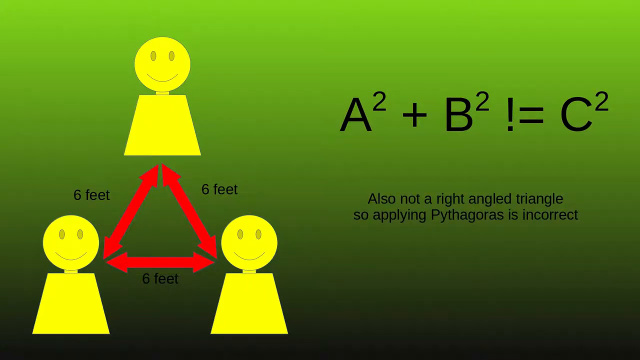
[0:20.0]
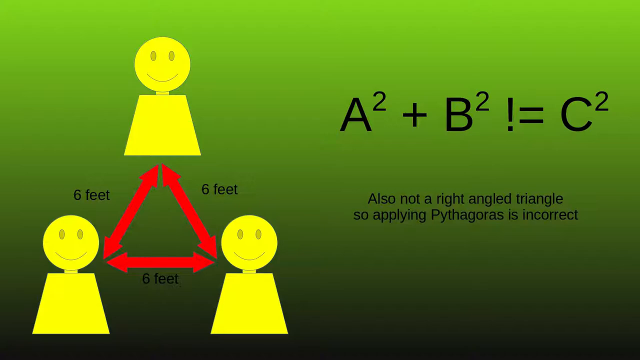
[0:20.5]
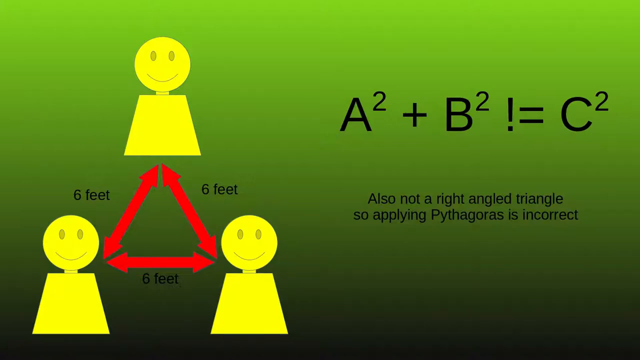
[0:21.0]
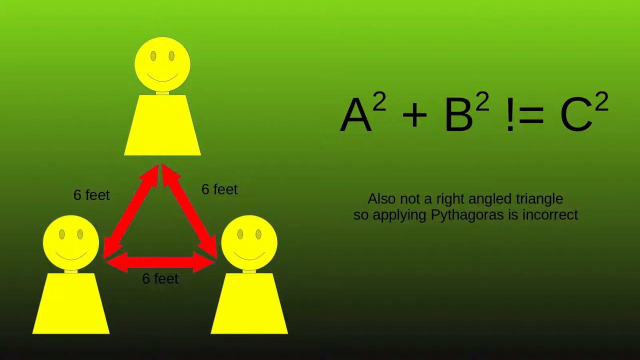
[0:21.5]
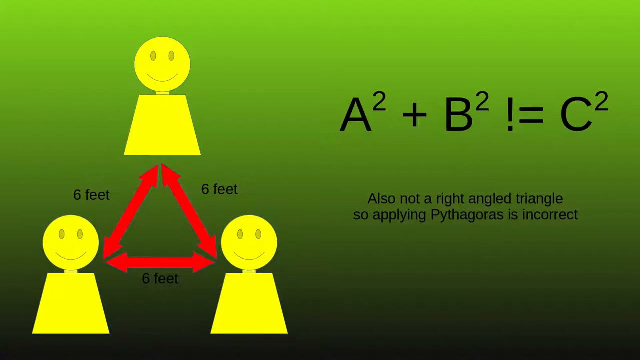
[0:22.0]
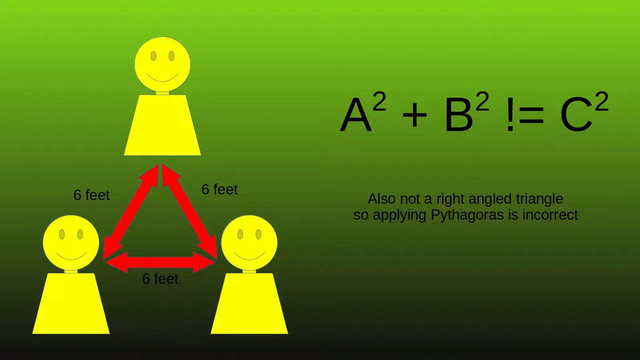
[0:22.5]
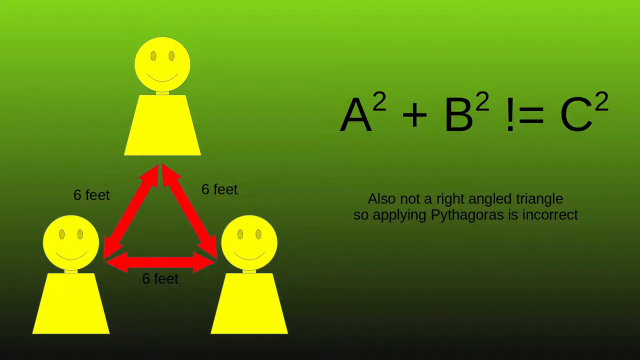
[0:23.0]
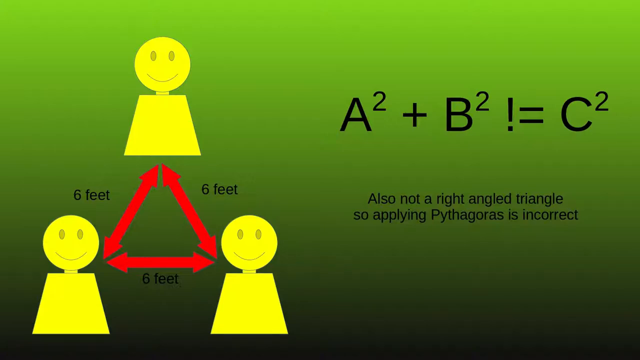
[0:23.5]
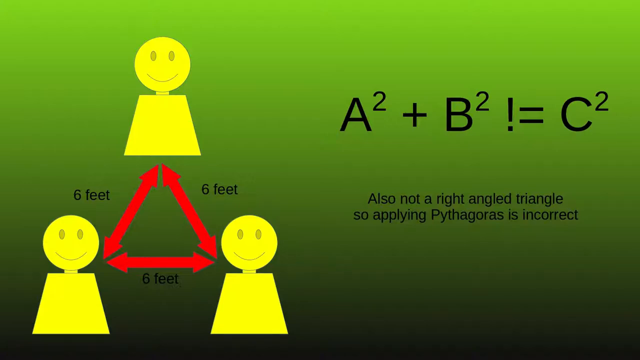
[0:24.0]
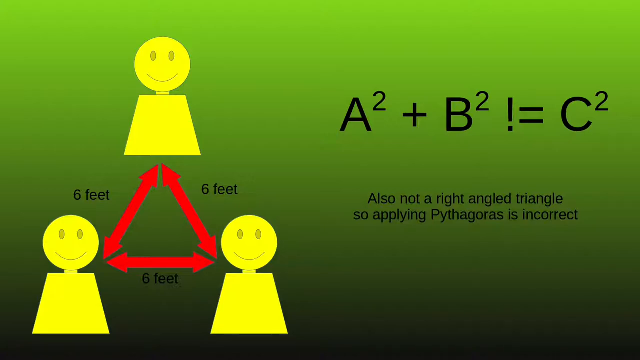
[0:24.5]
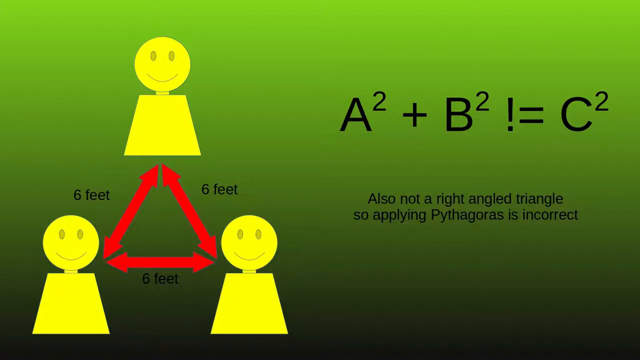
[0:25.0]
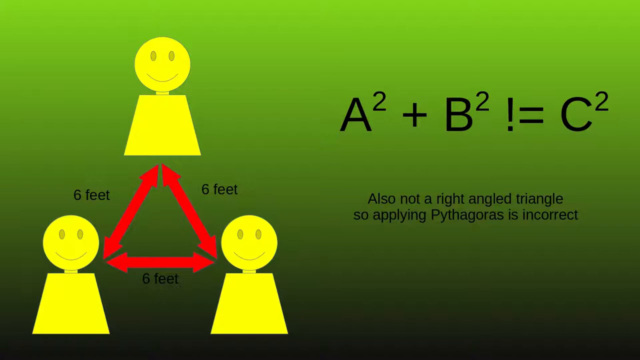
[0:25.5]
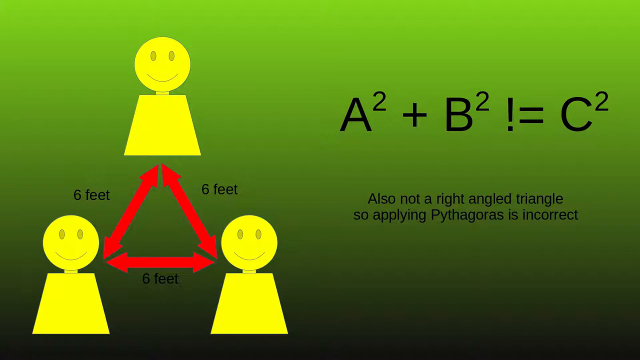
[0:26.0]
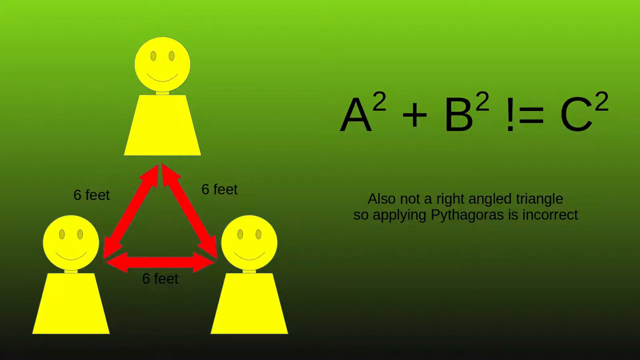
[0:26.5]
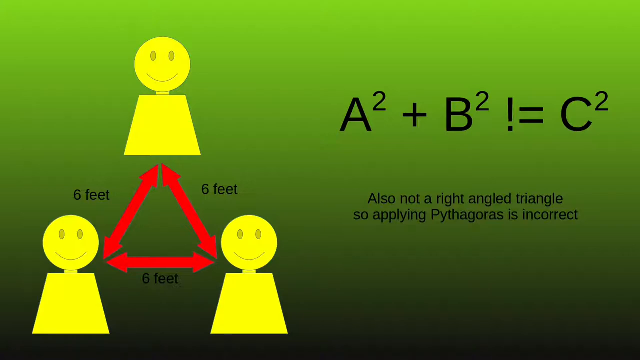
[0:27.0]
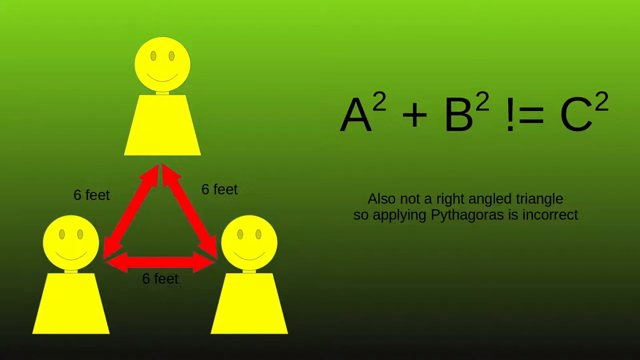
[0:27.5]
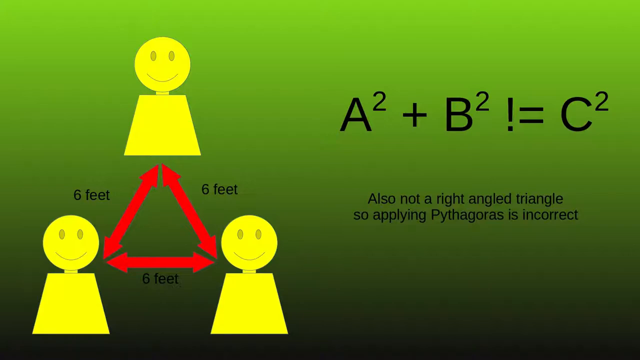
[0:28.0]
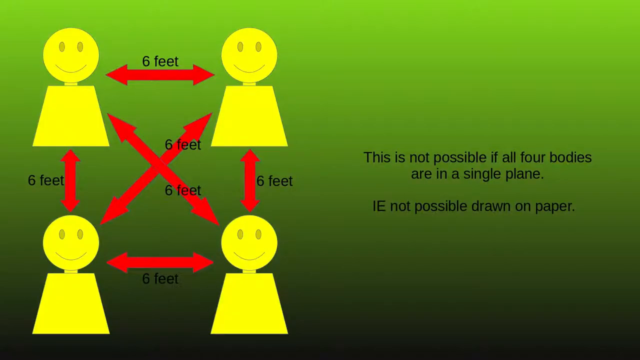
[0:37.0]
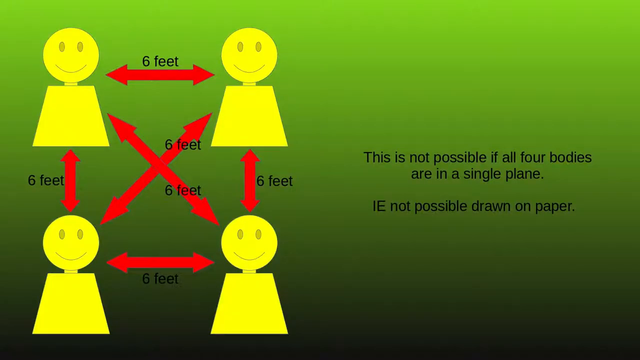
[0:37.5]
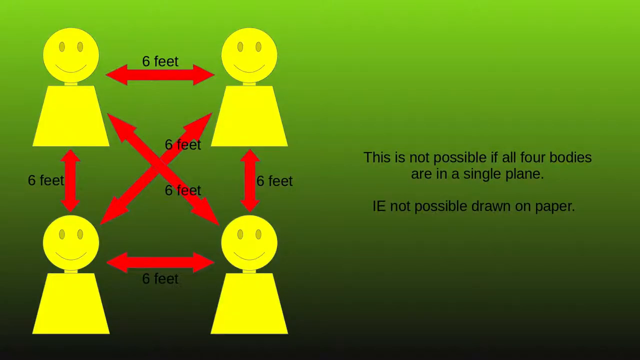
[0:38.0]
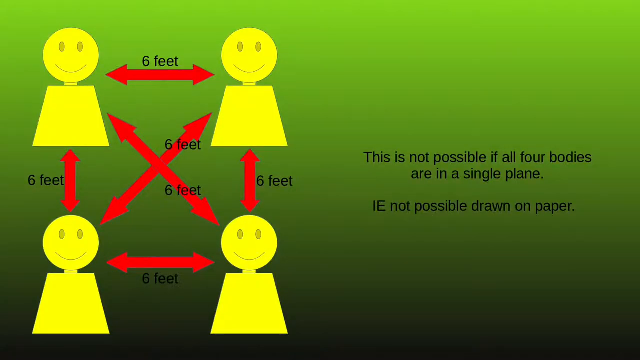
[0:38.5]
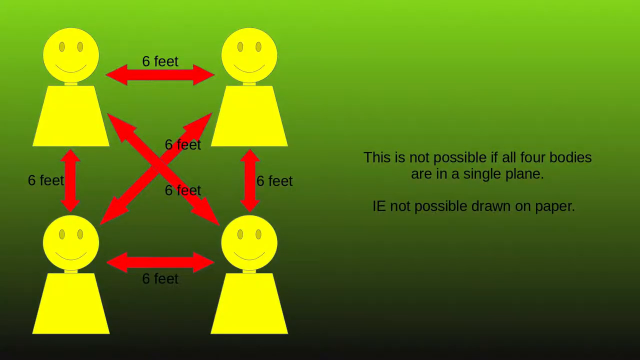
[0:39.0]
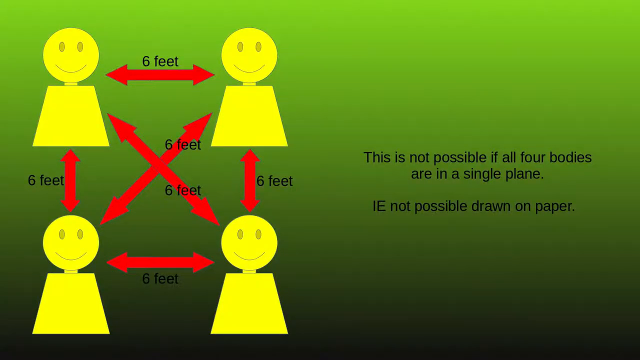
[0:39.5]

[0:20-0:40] A mostly green background shows three simple people on the left side, drawn as smiley faces on basic bodies, all yellow. A red arrow runs between each of them, each labeled as six feet, indicating they are all six feet away from each other. On the right side is a formula that says A-squared plus b-squared does not equal c-squared, along with black text explaining that it is not a right-angled triangle. The screen stays for a short while with nothing moving, then changes to a black screen for a few seconds. It then changes to a new green background with four people in the same style. Arrows between all of them indicate they are six feet from each other. Black text states that this is not possible if all four bodies are in a single plane and gives the example that it is not possible when drawn on paper.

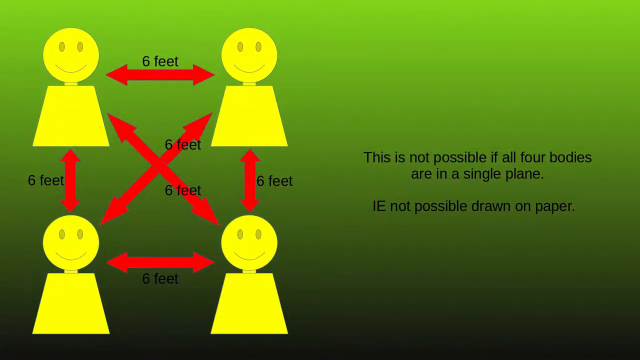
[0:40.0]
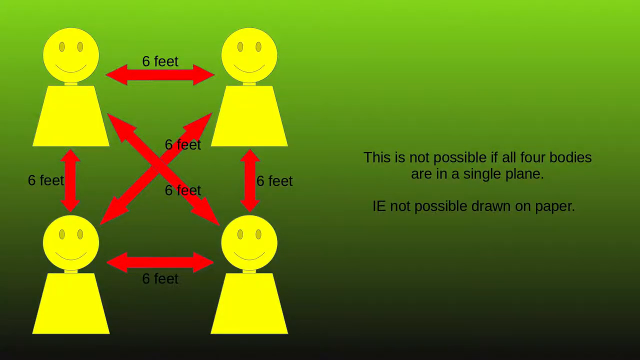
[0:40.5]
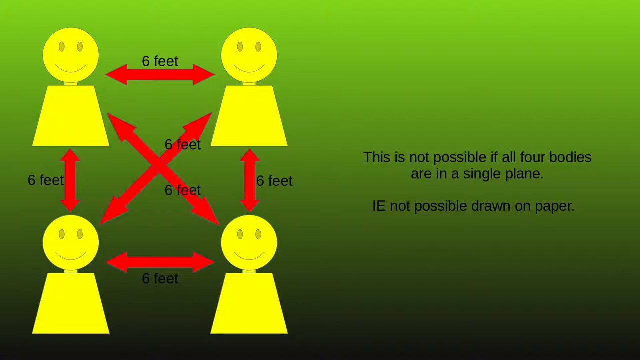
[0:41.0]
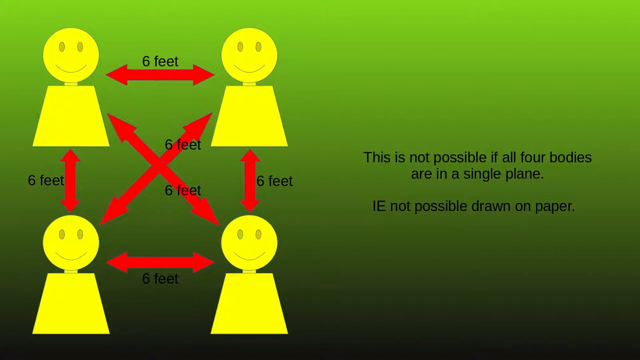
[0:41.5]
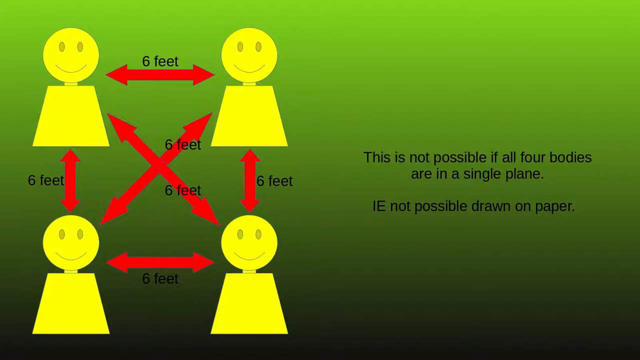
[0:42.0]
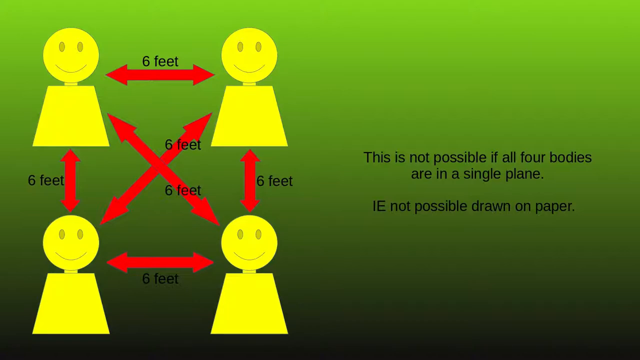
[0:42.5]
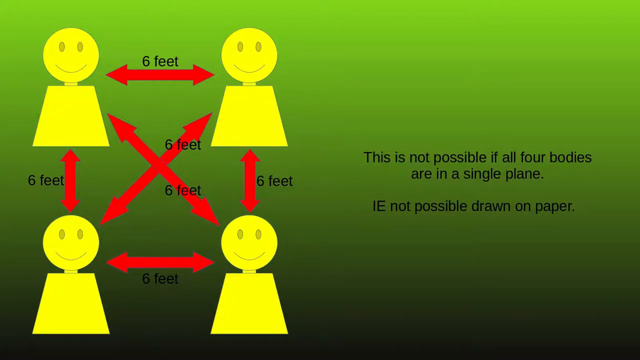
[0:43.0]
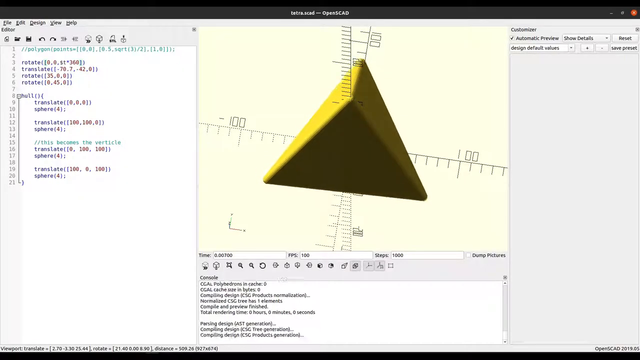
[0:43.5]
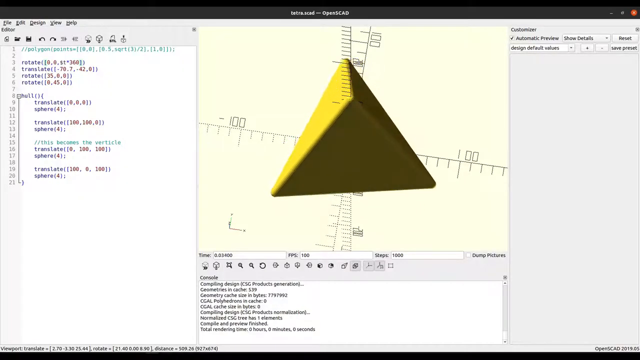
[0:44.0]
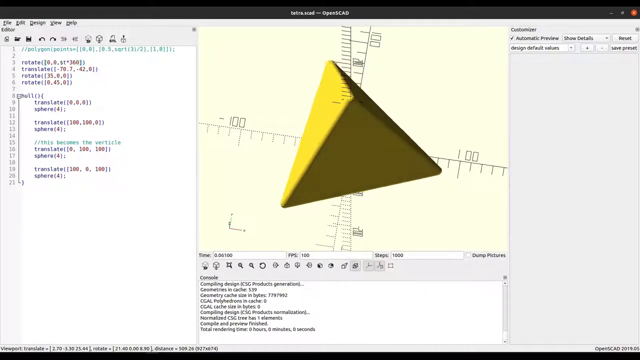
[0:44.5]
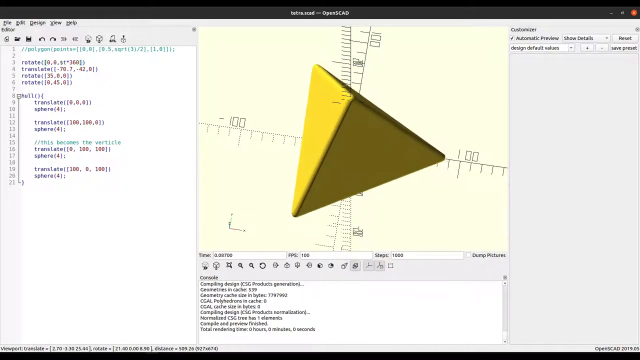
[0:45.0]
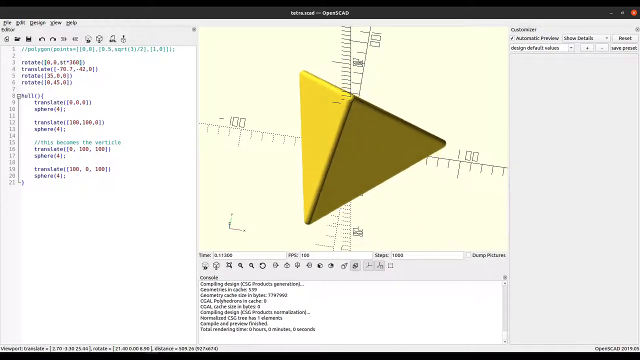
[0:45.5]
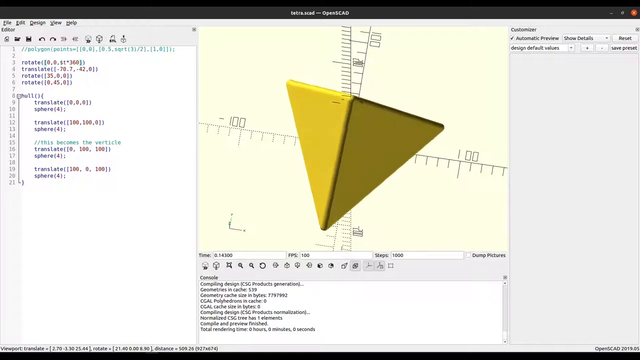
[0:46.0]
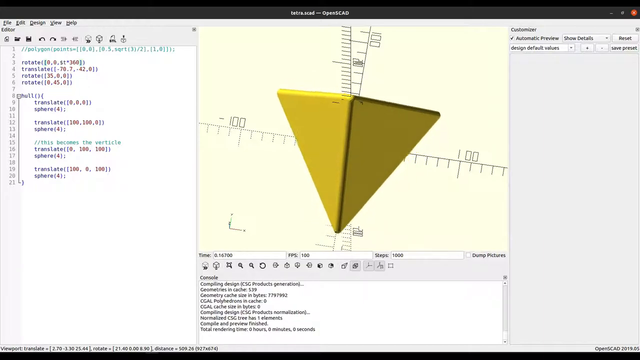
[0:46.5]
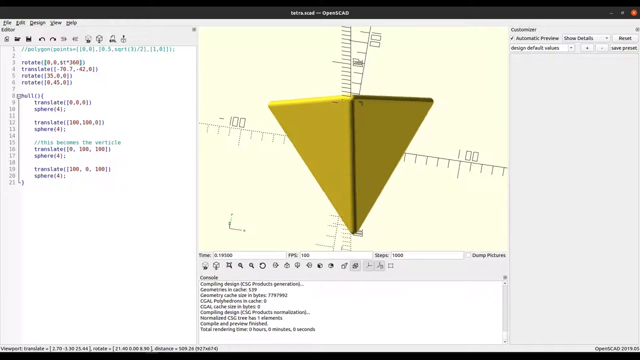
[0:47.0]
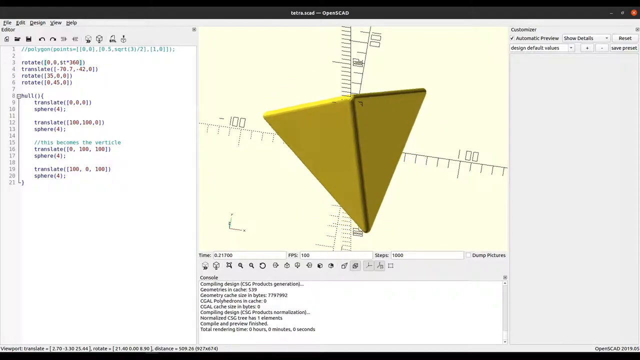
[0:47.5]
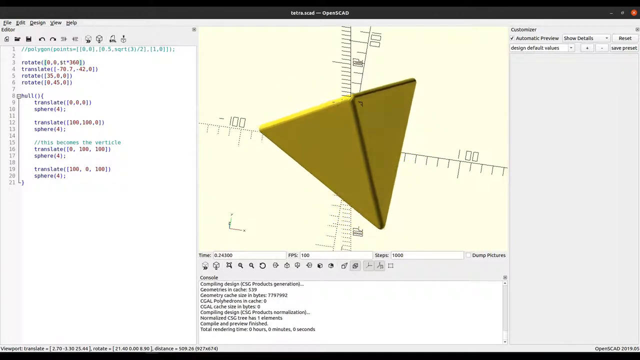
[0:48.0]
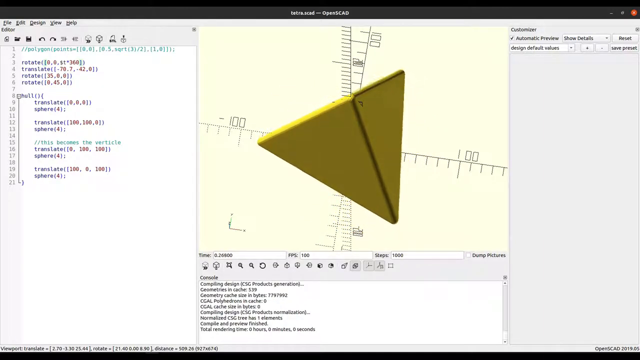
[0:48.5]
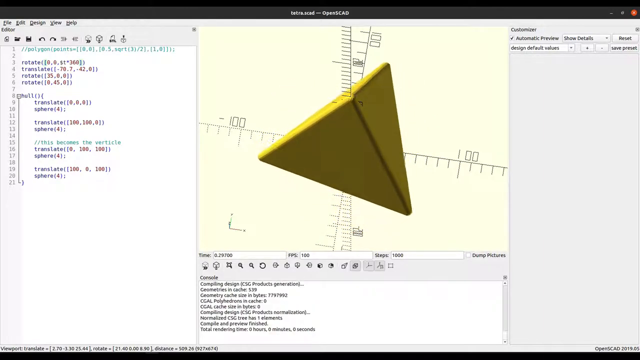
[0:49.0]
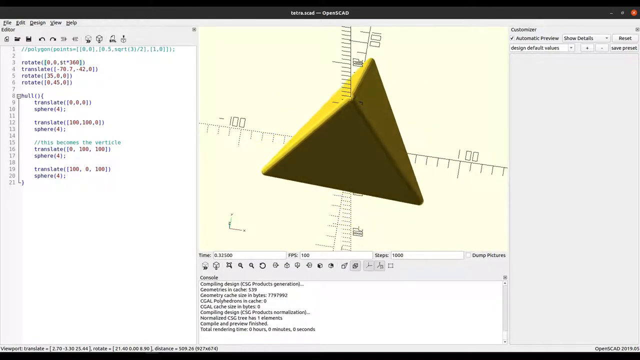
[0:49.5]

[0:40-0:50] A green background shows four simple geometric people. A red arrow between each of them is labelled as six feet: six feet from each other side by side, up and down, and diagonally. Black text to the right of the diagram states that this is not possible if all four bodies are in a single plane, such as if they are drawn on paper. The view changes to a 3D graphic in a program whose title is OpenCAD. It shows a 3D triangle that slightly spins in place, surrounded by a large amount of information.